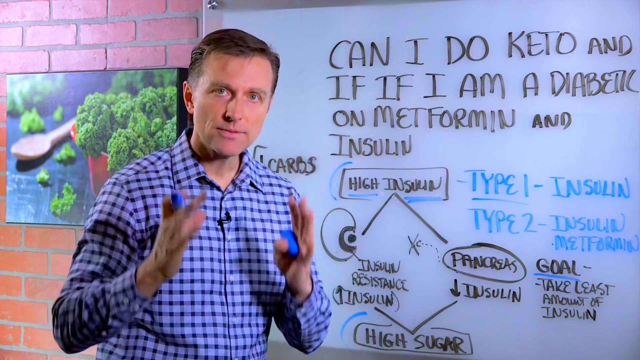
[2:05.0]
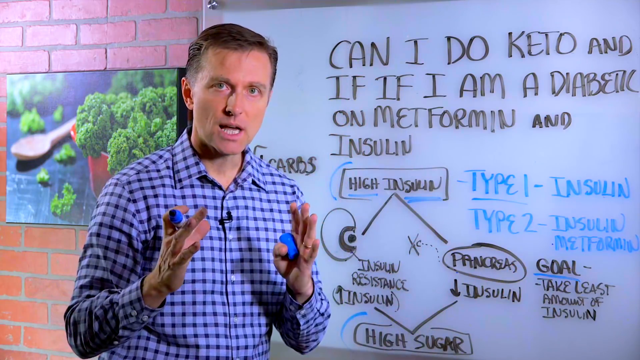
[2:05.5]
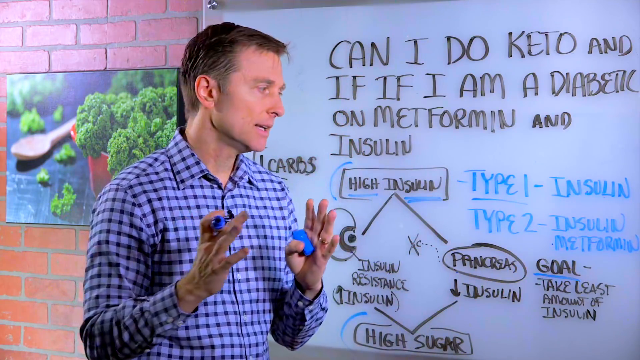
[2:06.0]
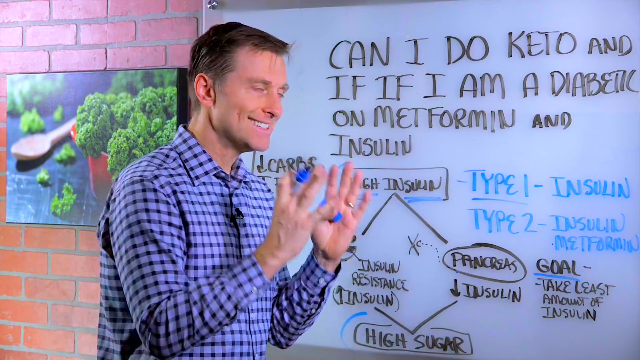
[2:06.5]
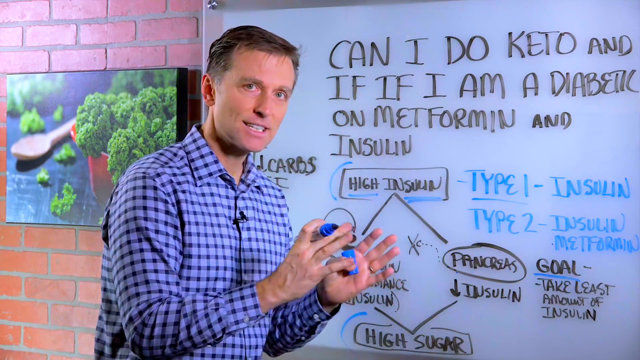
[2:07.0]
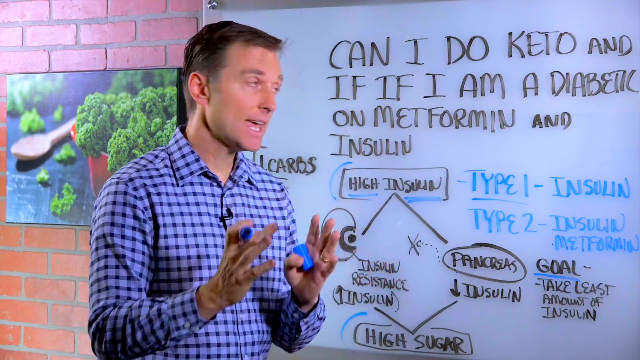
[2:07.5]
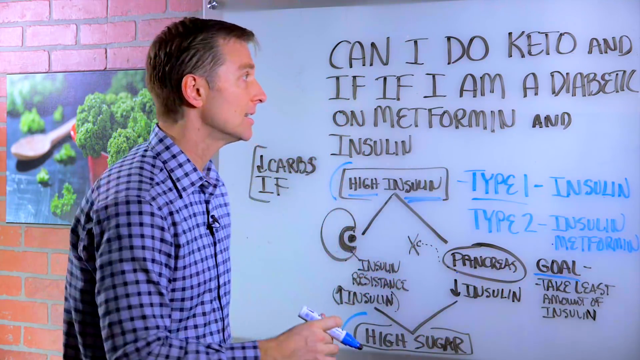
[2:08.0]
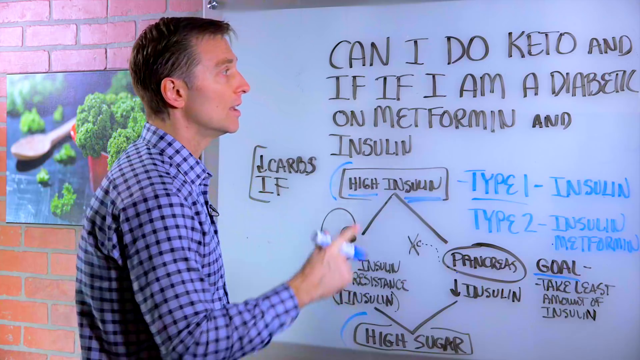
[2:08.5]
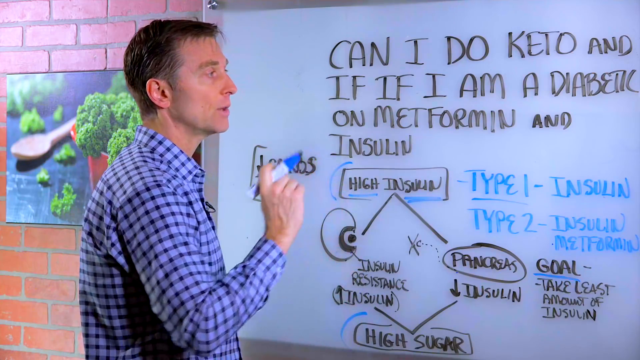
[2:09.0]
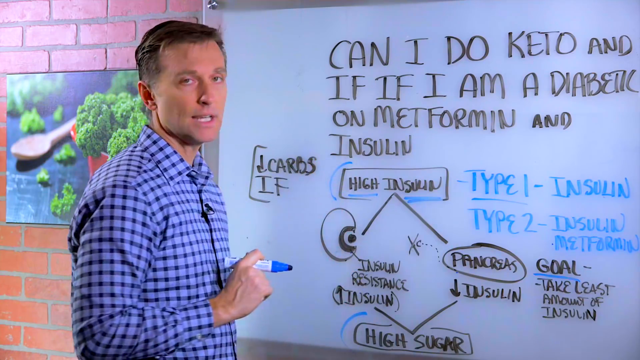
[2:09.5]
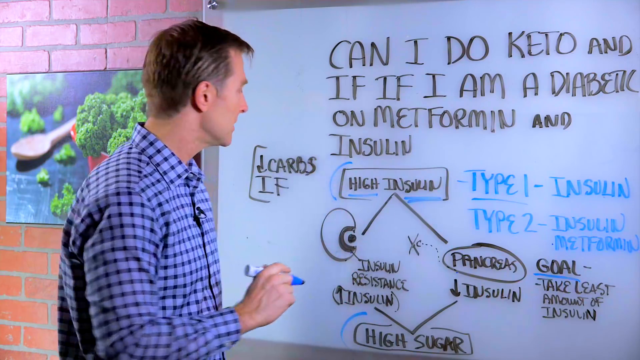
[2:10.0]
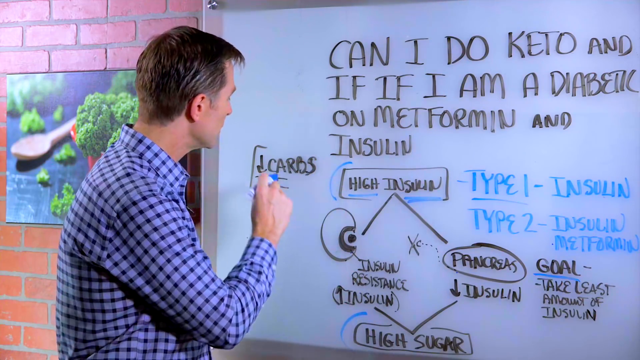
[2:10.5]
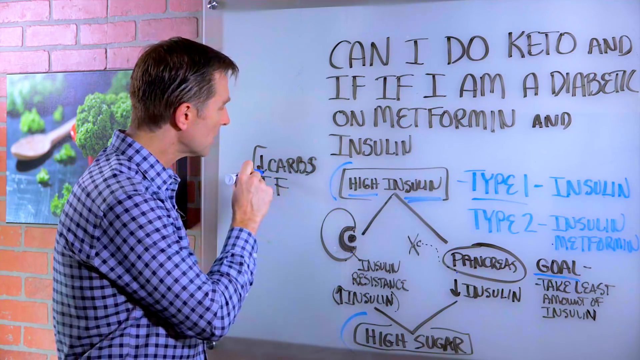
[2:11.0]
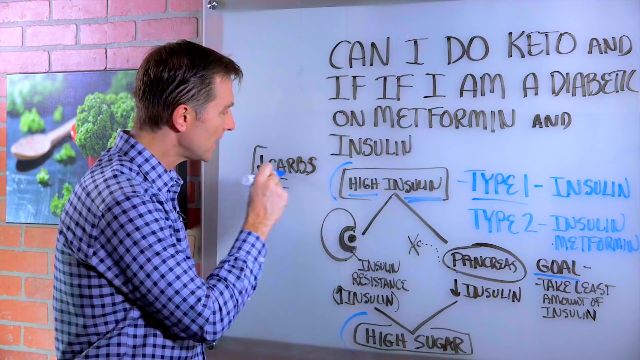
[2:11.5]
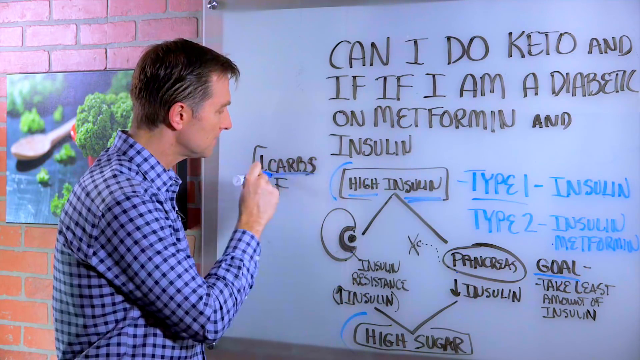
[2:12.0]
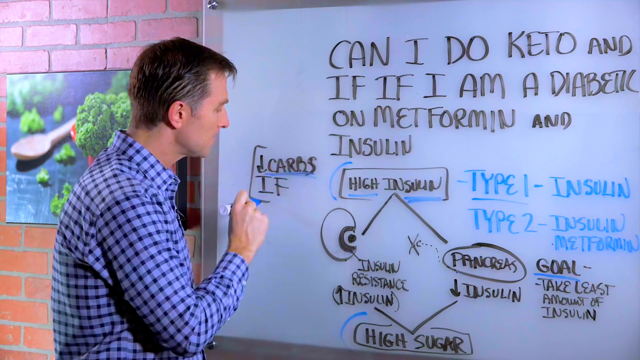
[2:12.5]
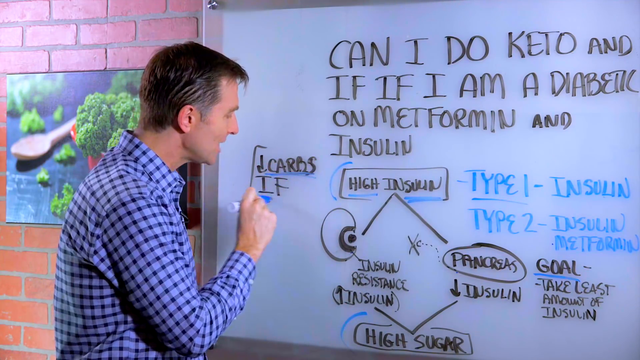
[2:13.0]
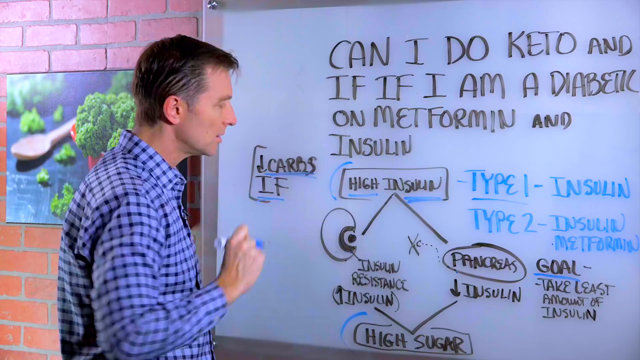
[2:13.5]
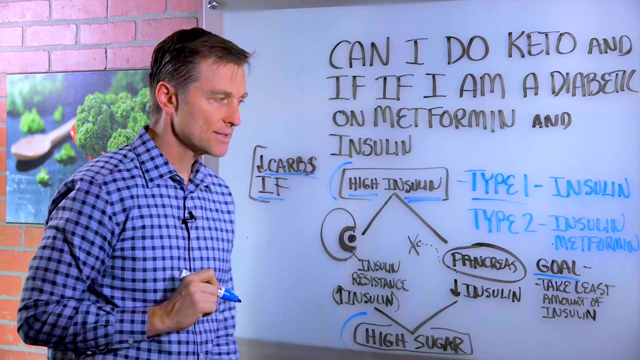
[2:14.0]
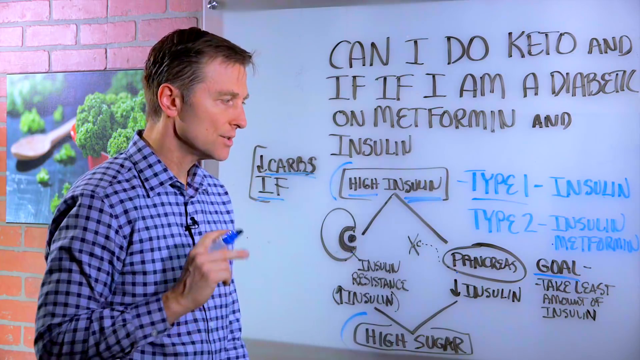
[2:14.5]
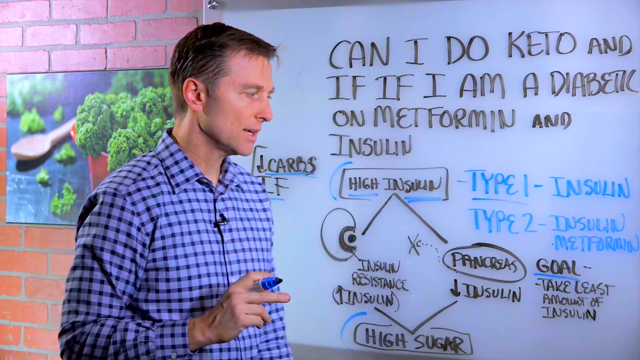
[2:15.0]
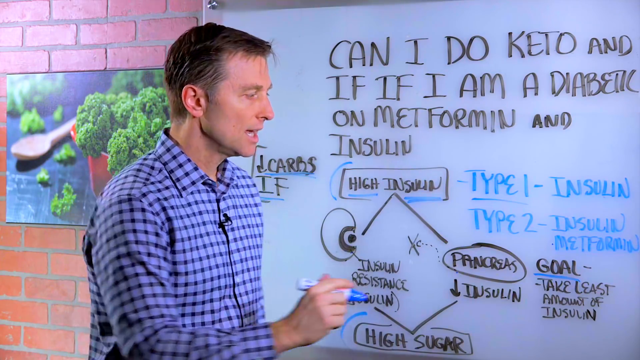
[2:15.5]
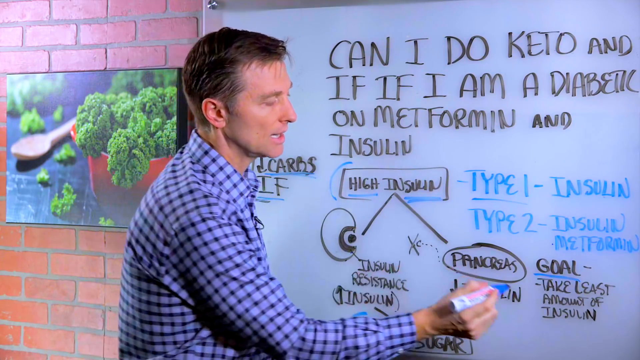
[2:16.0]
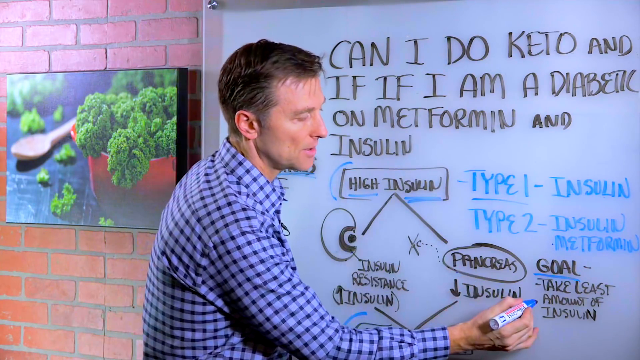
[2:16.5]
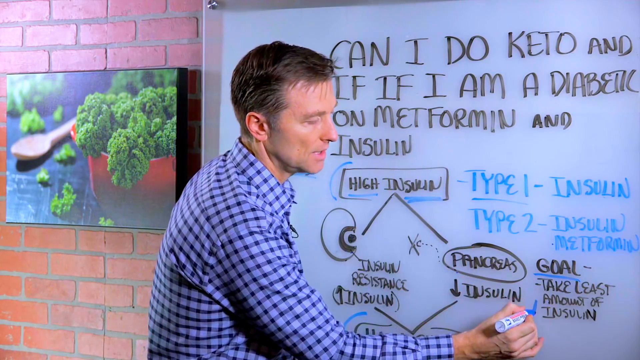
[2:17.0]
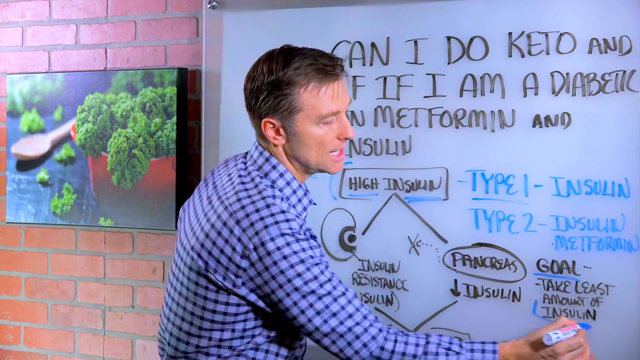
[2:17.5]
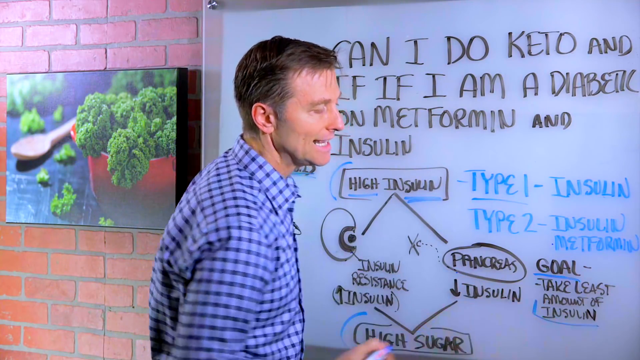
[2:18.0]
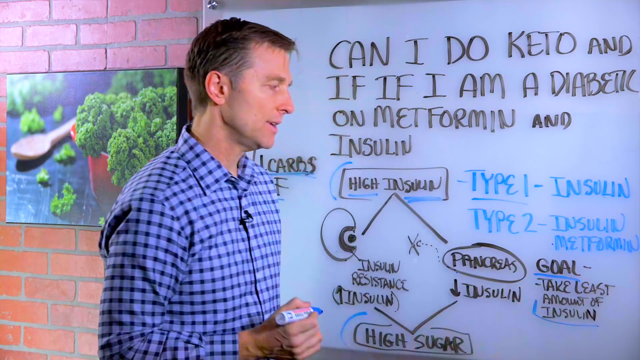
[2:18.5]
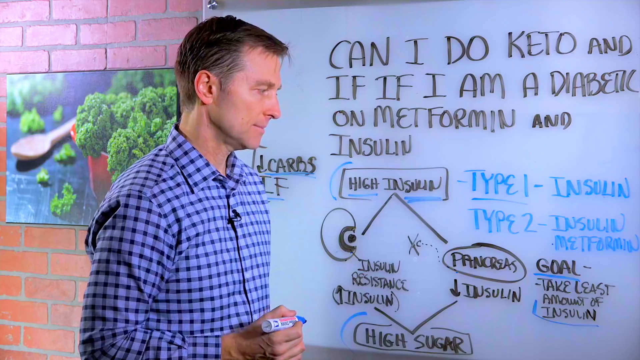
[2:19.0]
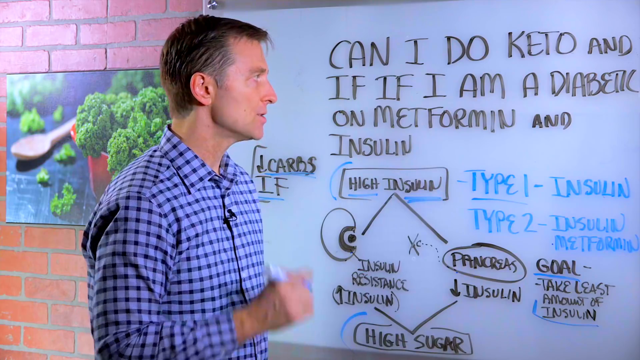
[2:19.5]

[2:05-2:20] Still holding the blue marker, the man goes to a part of the whiteboard with a down arrow and the words "carbs IF" and underlines "carbs" and "IF." Those words are in a sort of half box outside the diagram. He then goes back to where it says goal, "take least amount of insulin," which is also outside the diagram, and underlines the word insulin, kind of putting a box around it. Before underlining, he points at the whiteboard with the marker while talking.